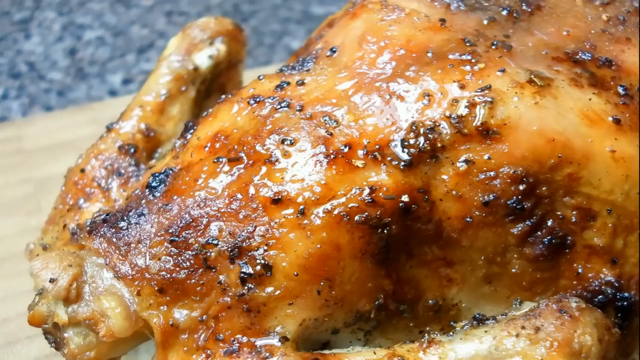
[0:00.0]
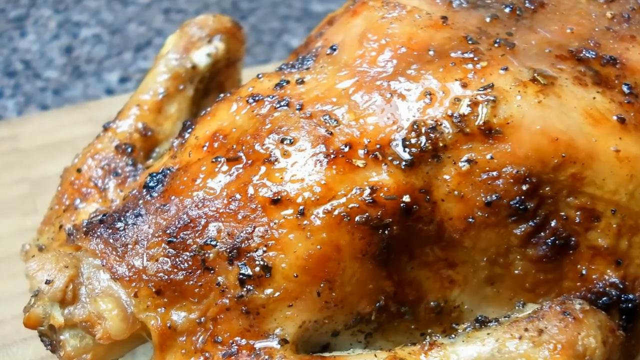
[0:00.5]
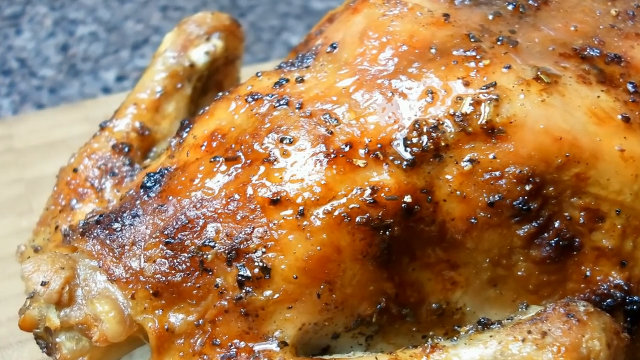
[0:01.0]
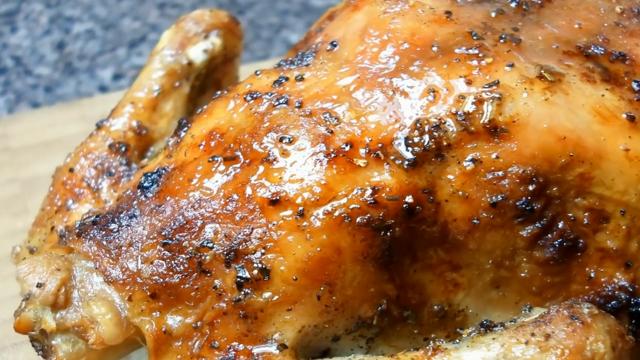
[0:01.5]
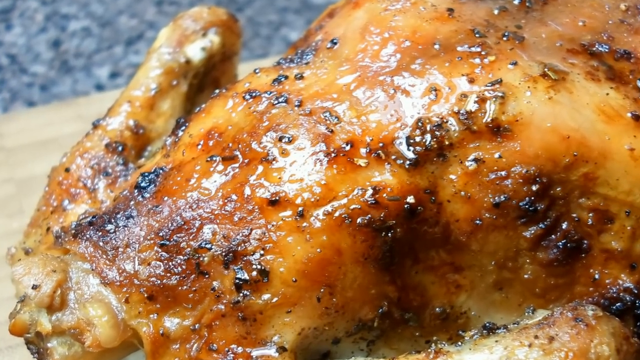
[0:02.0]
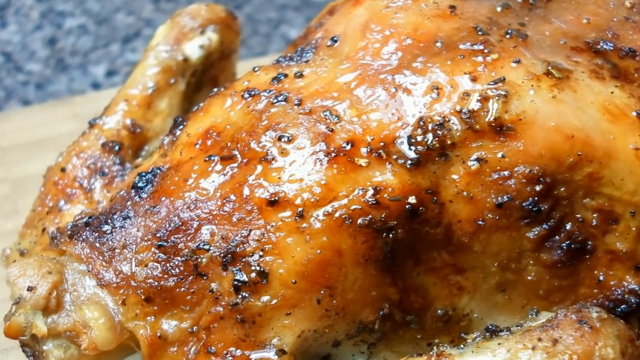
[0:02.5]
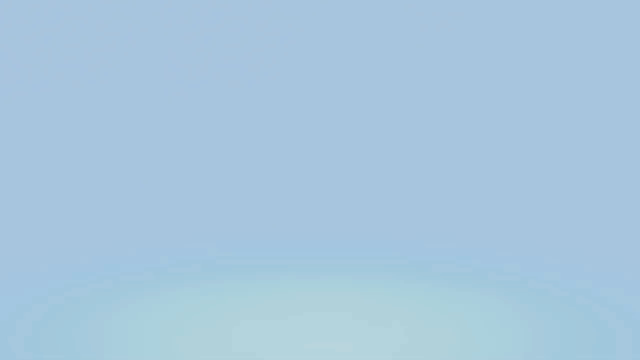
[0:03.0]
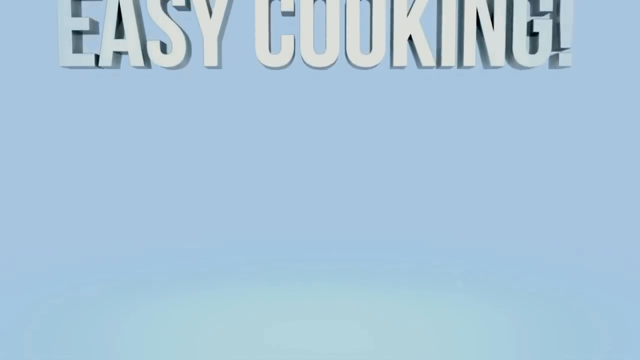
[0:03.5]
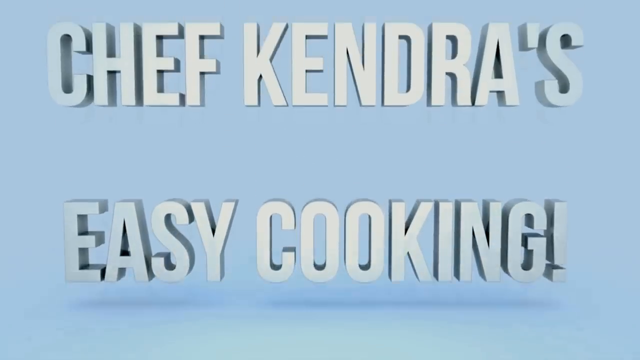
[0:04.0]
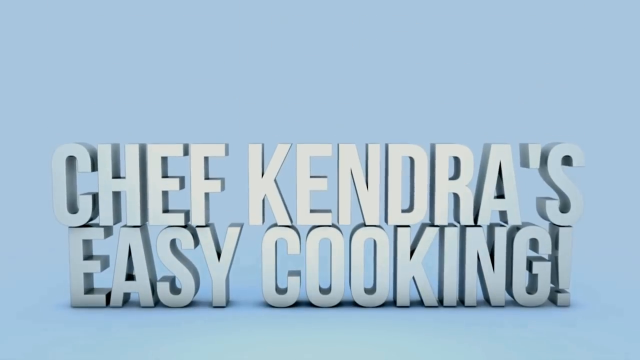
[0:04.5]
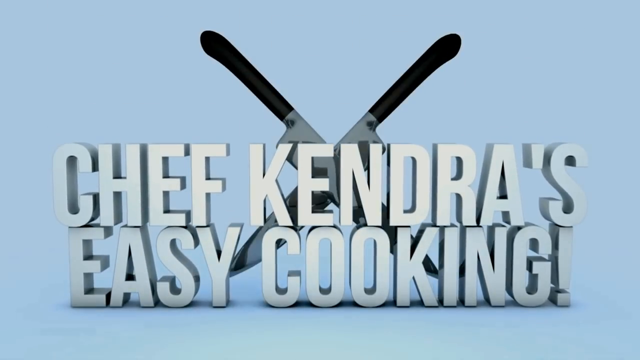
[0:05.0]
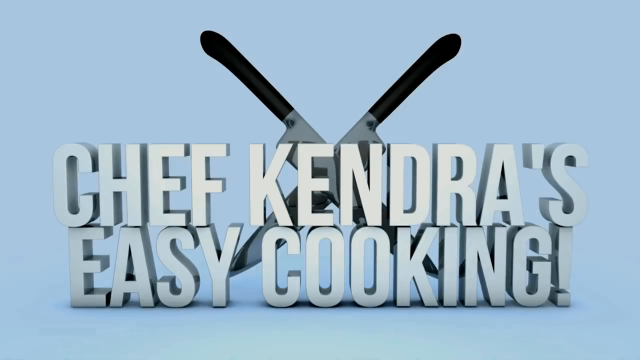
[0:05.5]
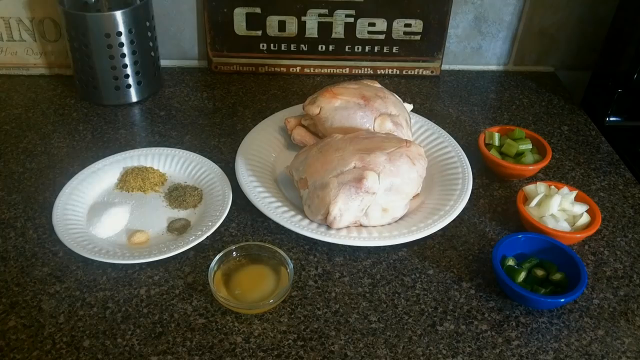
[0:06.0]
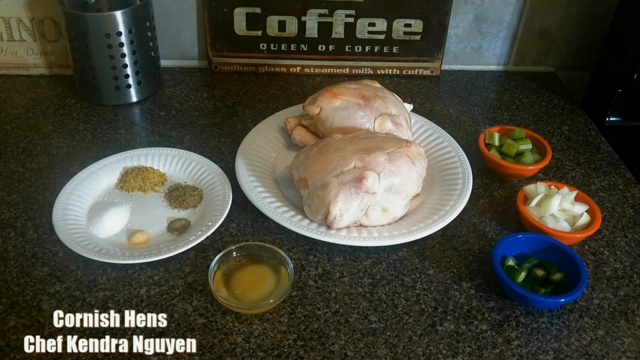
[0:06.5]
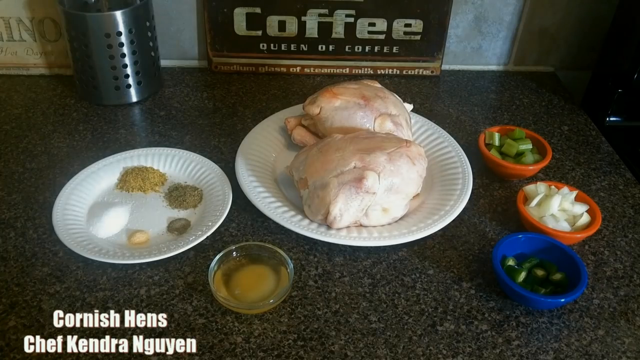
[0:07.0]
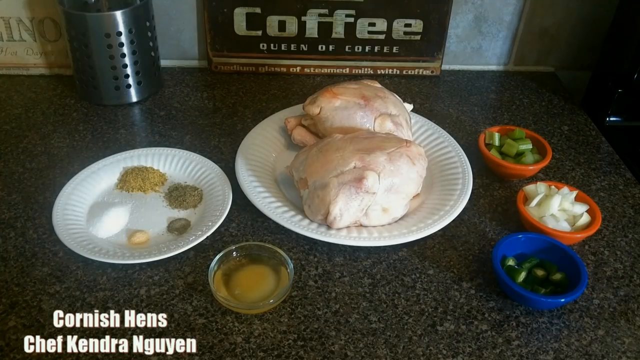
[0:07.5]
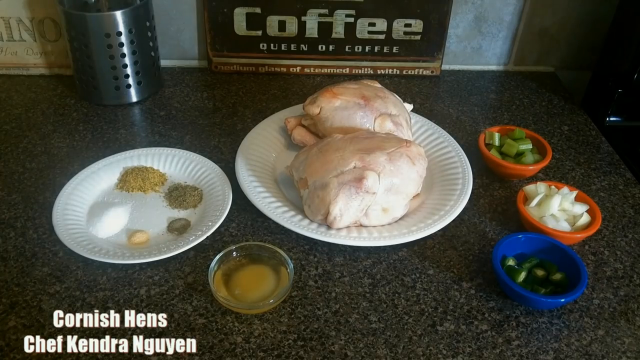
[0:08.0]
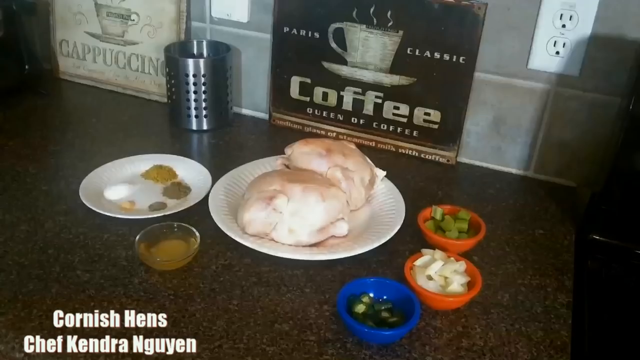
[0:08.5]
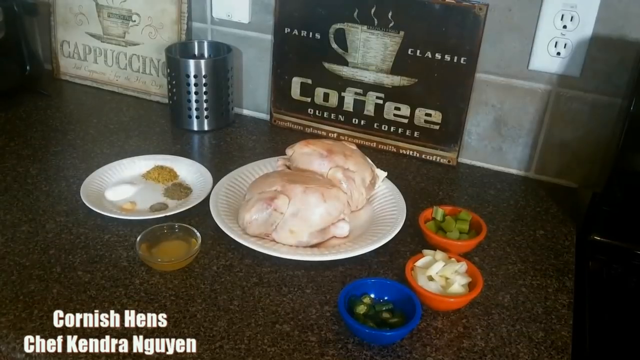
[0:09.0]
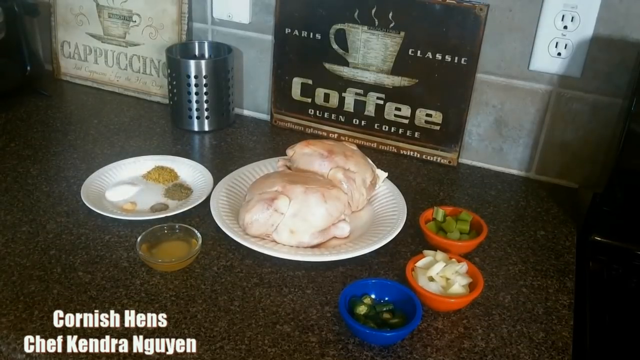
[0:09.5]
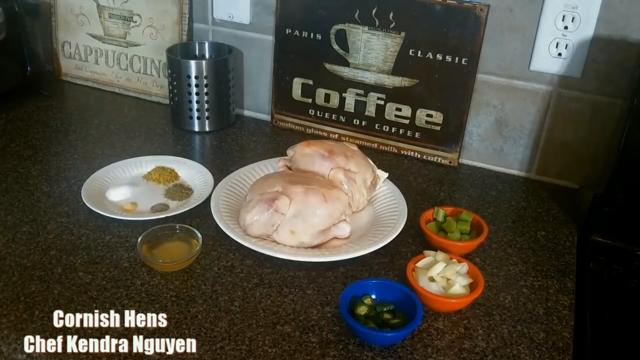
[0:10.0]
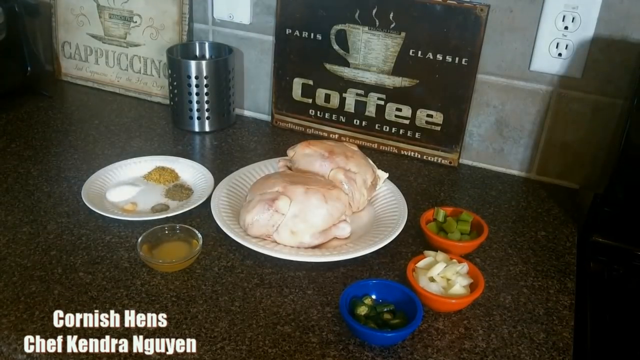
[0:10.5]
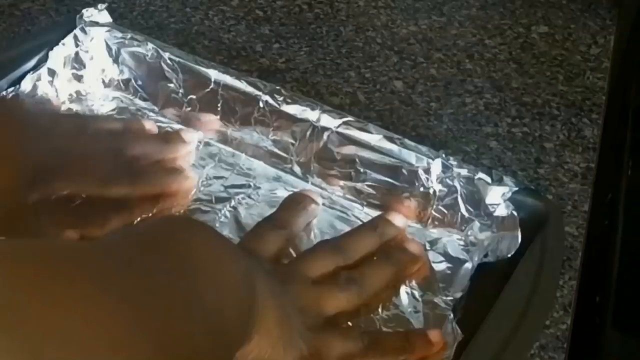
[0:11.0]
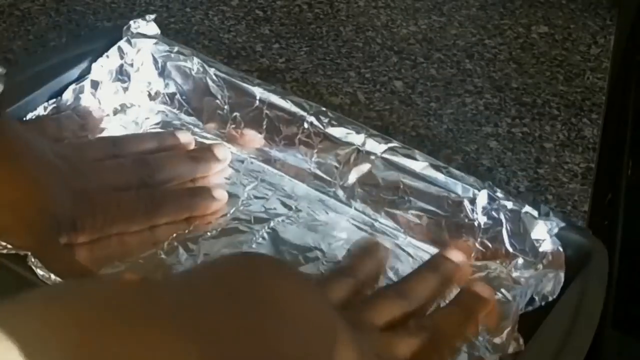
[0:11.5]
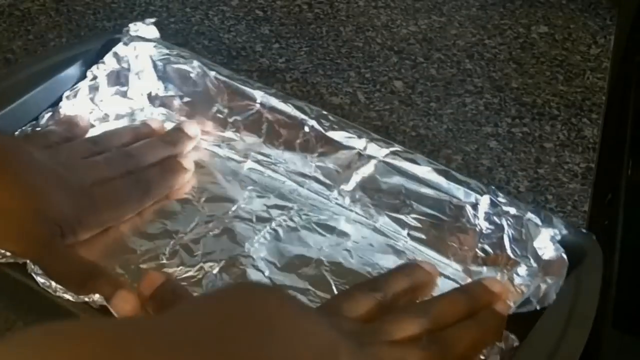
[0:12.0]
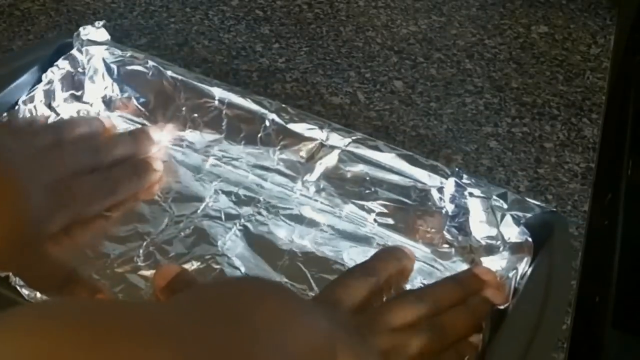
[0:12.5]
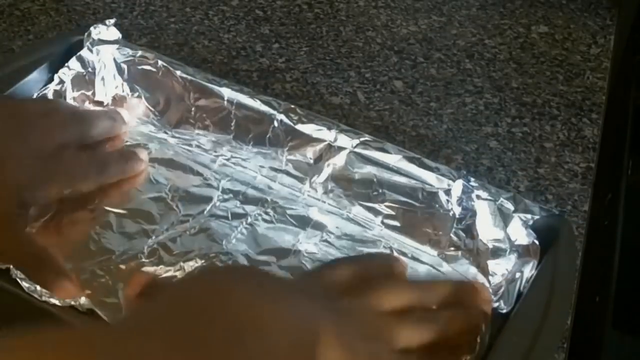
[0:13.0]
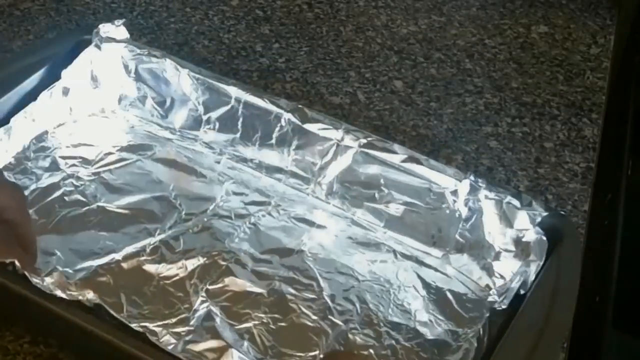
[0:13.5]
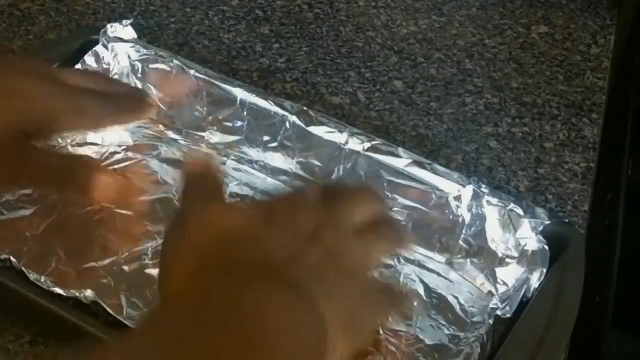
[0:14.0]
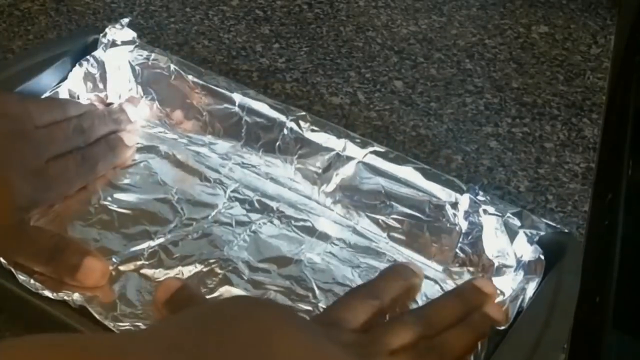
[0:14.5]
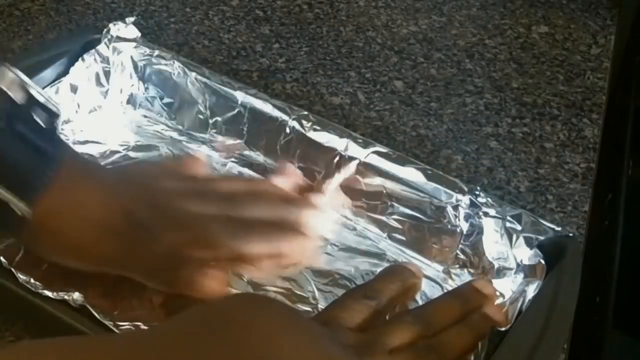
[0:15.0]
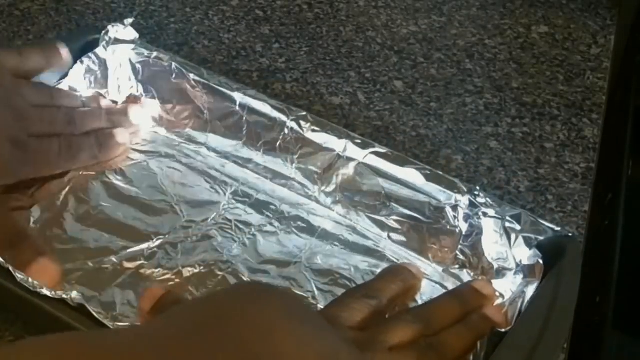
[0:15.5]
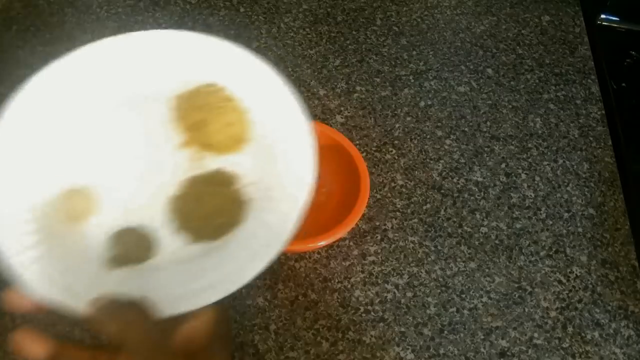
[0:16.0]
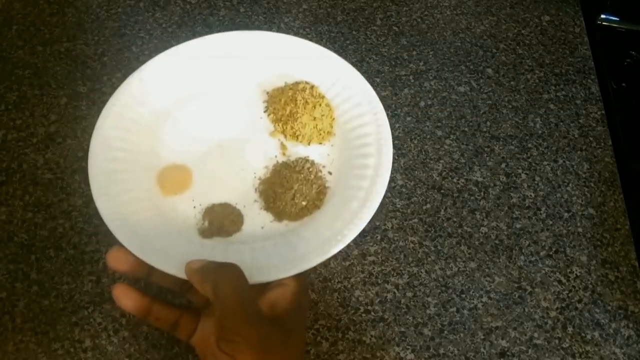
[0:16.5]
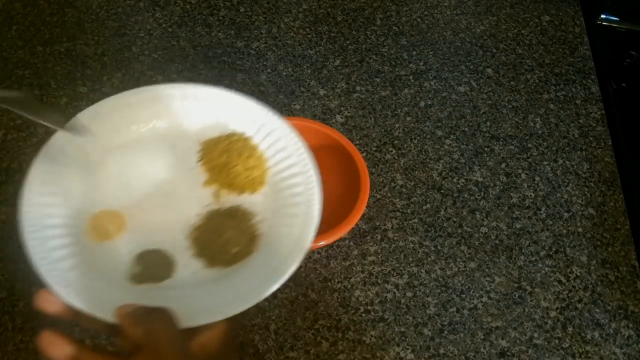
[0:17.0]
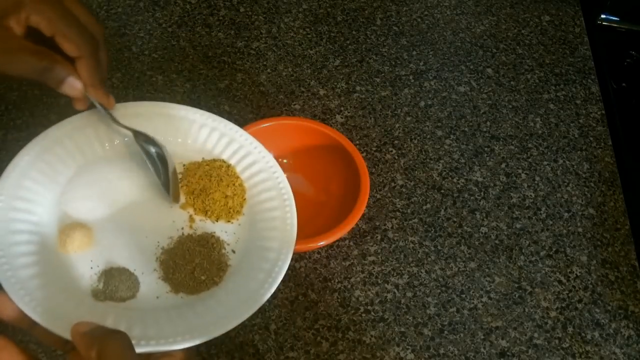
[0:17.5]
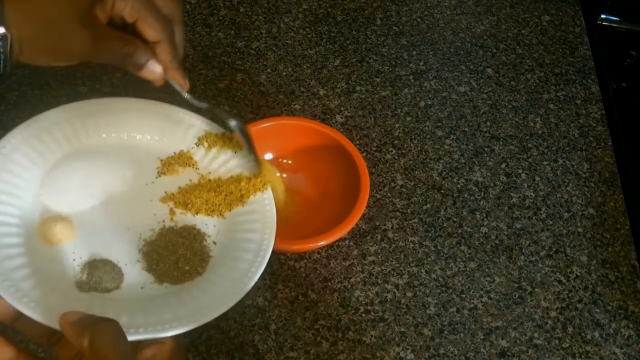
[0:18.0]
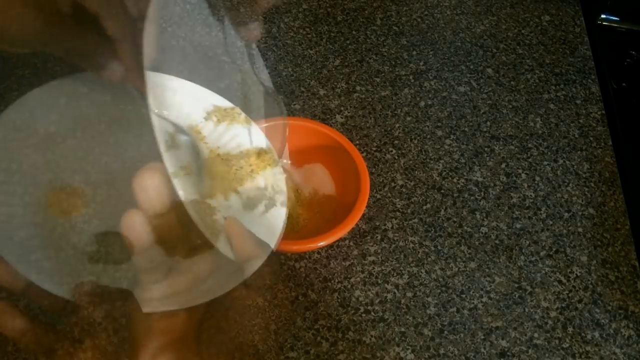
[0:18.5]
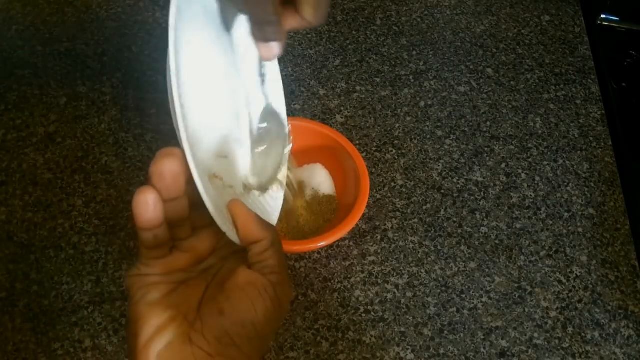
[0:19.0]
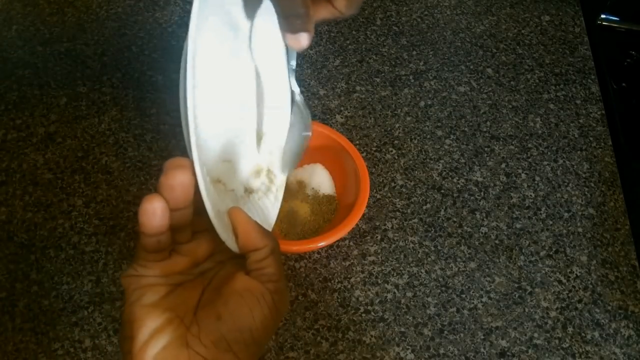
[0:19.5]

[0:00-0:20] The video is about cooking Cornish hens. No people are shown. It opens on a shot of uncooked Cornish hens with various spices and seasonings, apparently along with several other ingredients beyond the spices. A pair of hands puts tinfoil in a pan and spices in a bowl, and there is a close-up of the cooked Cornish hen. The chef's name is Kendra Ngen. Little is seen beyond some of the spice being mixed with salt. The spices are not identified on the screen, but they look like mustard or cumin, rosemary, and a large amount of salt.